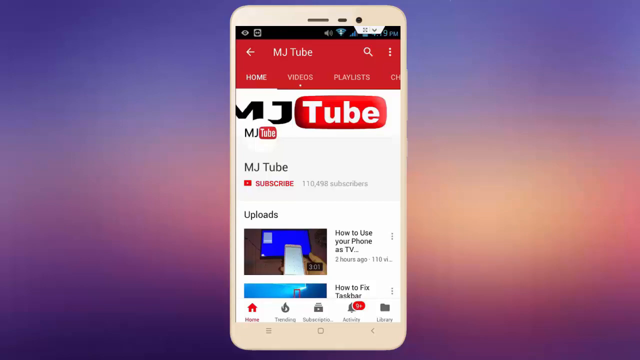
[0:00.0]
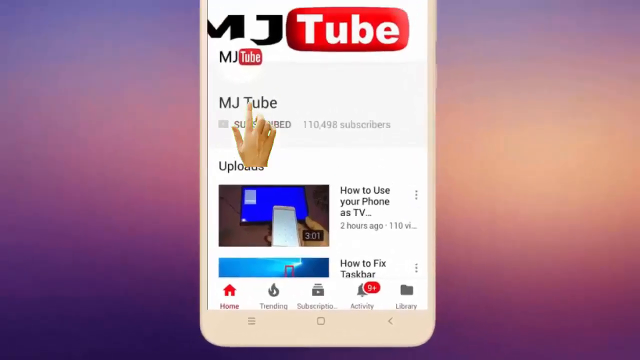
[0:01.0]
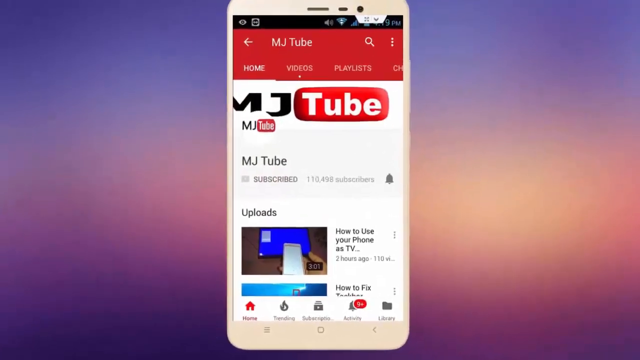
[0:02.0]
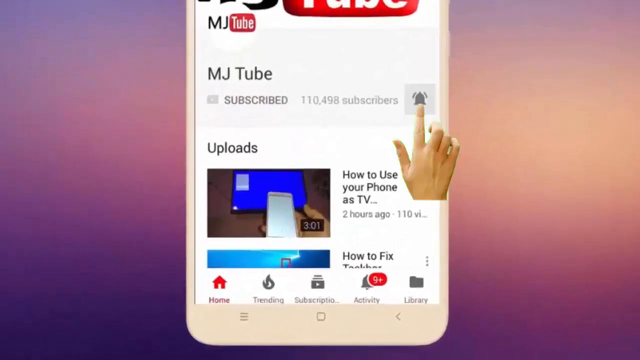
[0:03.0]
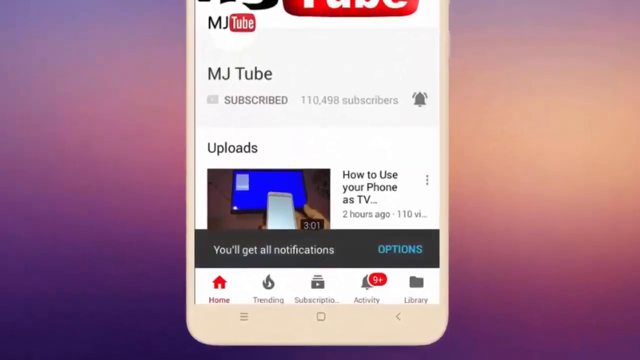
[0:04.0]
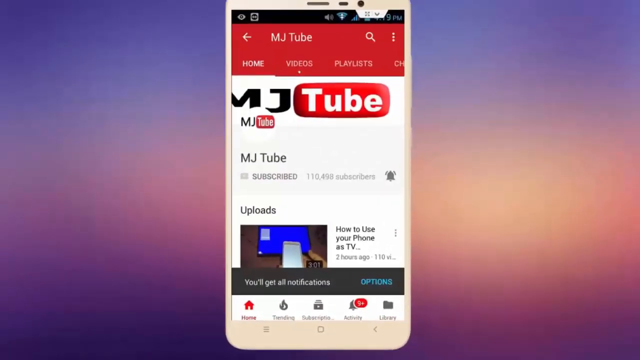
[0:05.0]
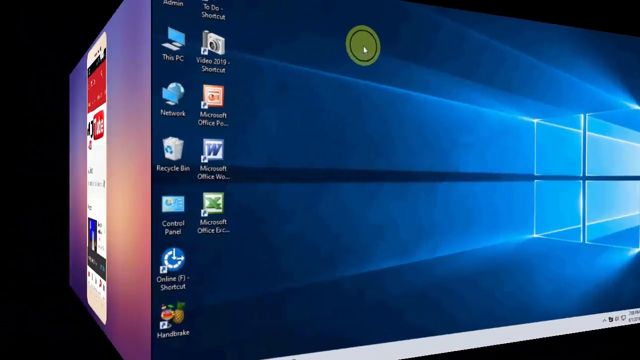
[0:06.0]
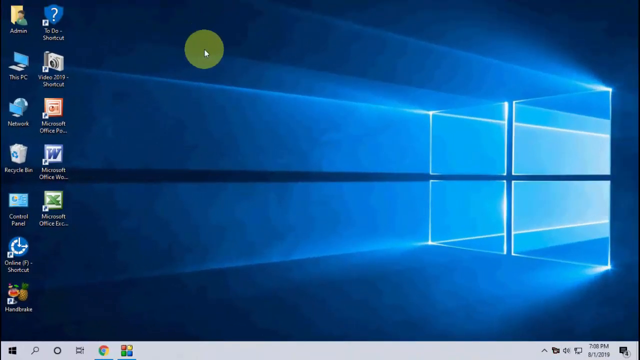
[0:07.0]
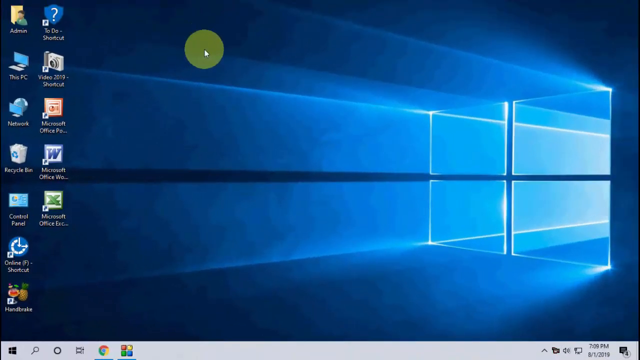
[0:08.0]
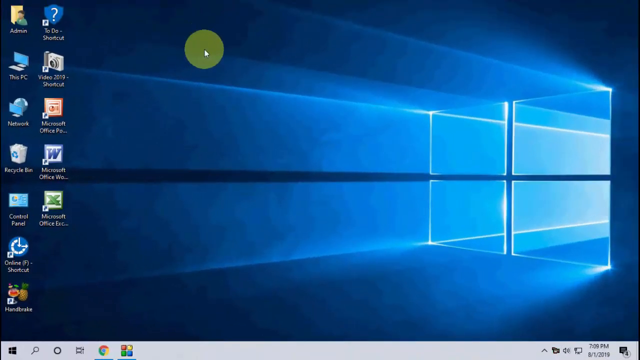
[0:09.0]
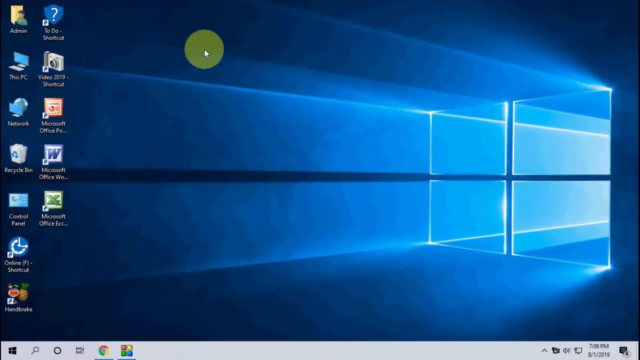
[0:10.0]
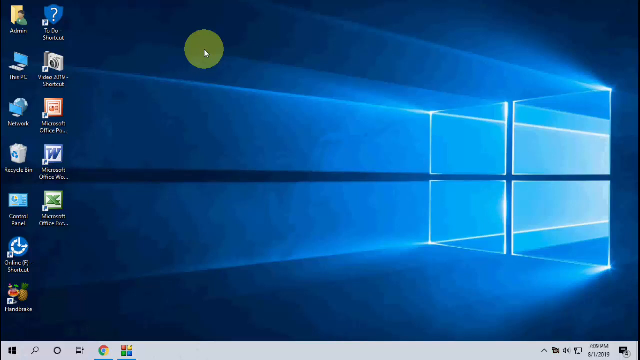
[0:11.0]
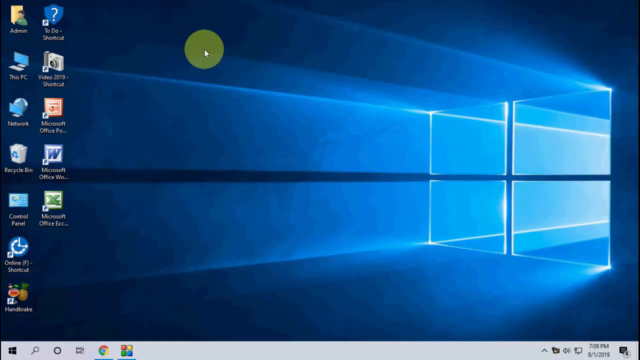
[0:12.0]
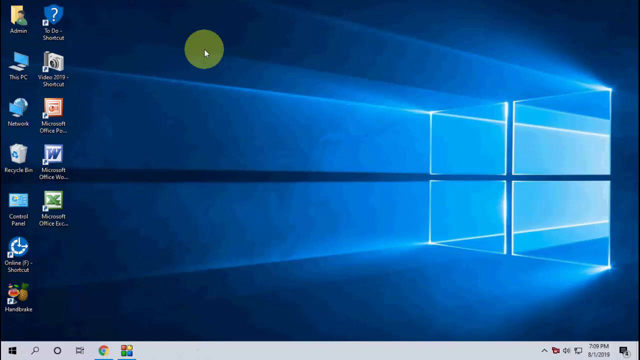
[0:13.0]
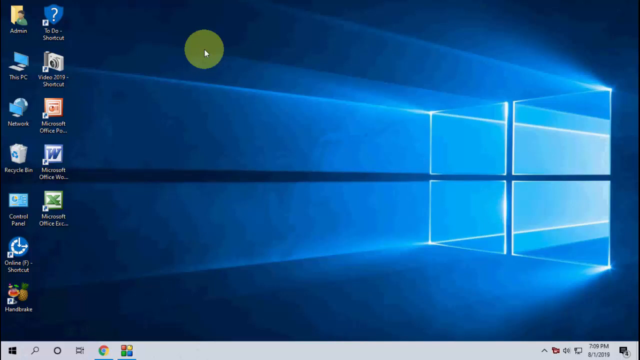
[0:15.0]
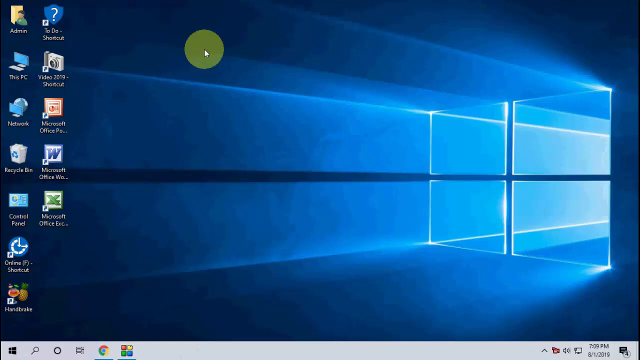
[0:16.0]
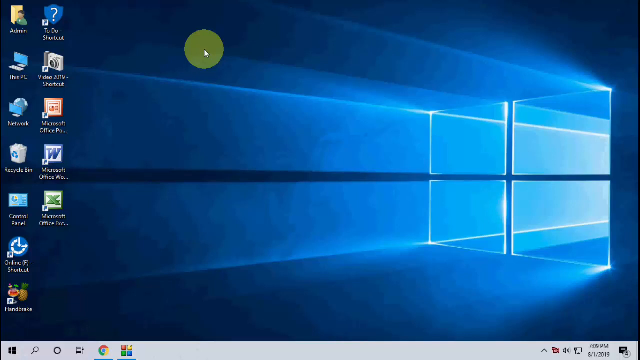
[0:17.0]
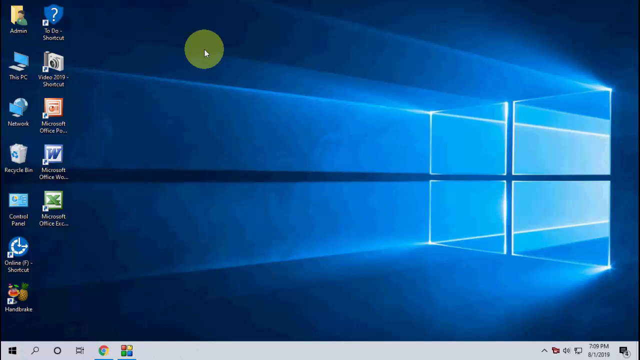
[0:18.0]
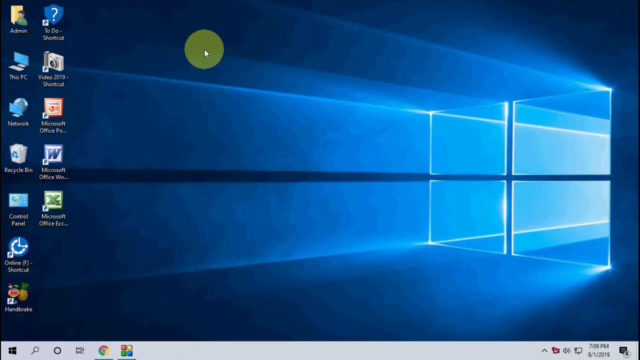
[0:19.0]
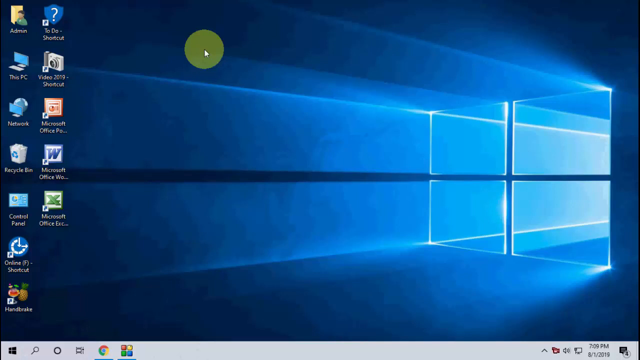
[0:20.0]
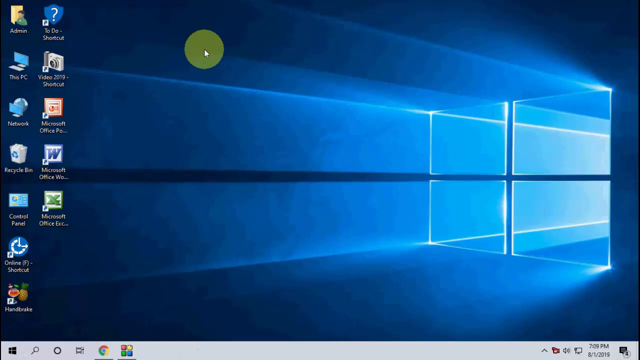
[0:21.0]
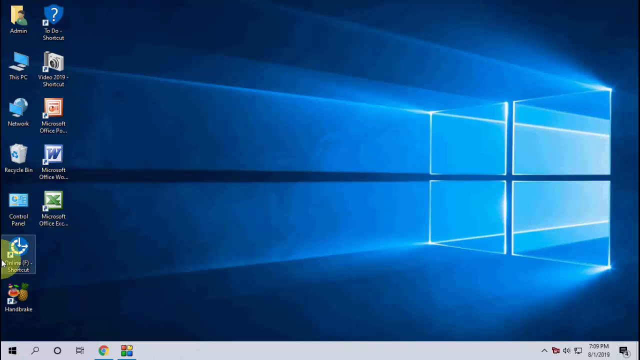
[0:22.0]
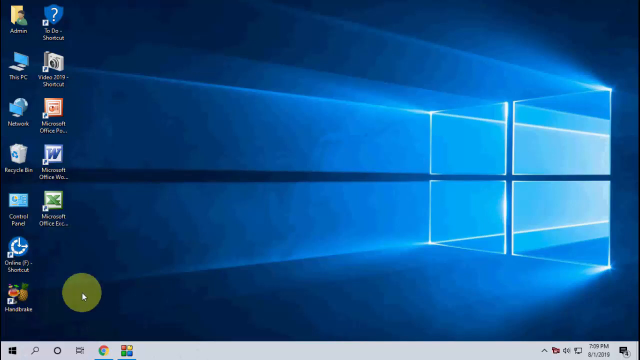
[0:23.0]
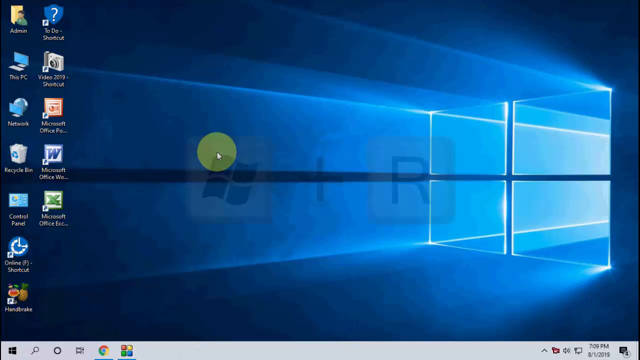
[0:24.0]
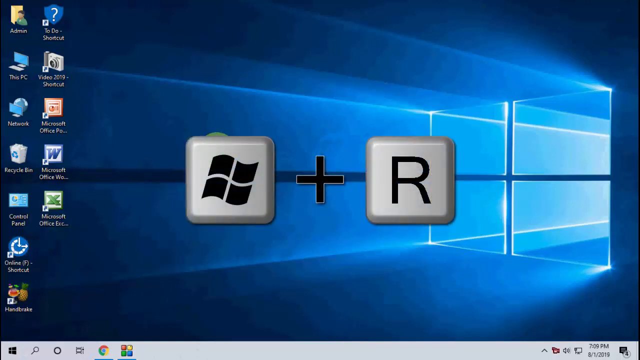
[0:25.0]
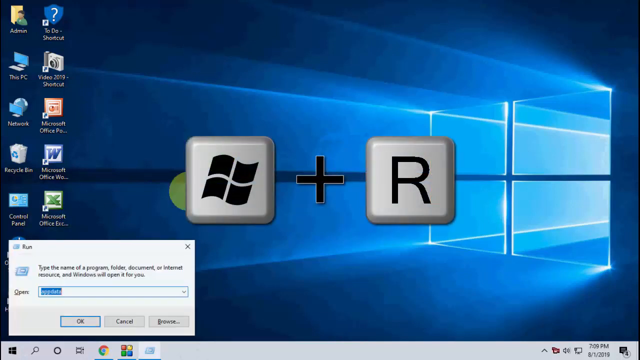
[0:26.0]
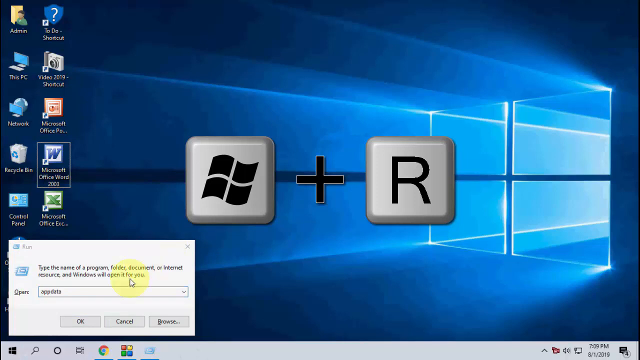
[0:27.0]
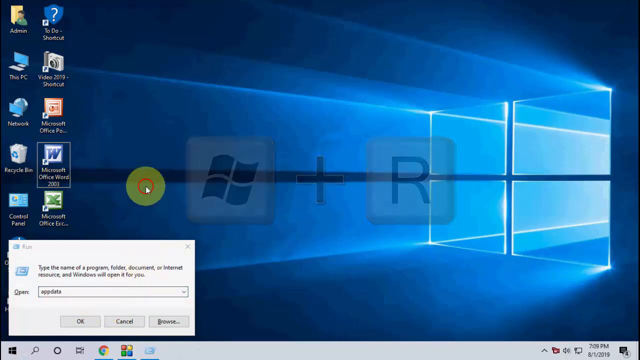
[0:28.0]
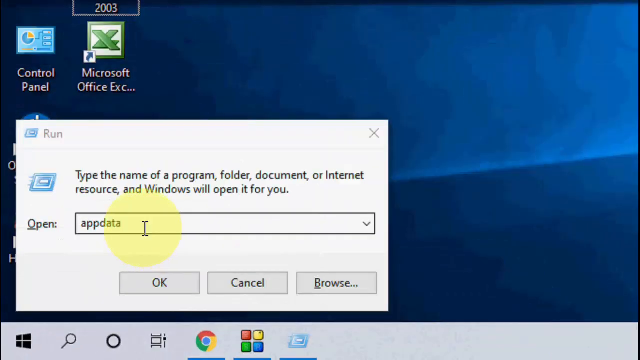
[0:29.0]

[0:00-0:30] The video opens on an app on a phone called MJtube, which is similar to YouTube, and the view keeps zooming in and out of it. An animated finger appears and clicks on the subscribe button, and then "you'll get all notifications" pops up. The video then goes to a desktop screen with a standard kind of blue background and a mouse cursor that has a green circle around it. The cursor stays in that position until it goes to the very bottom left of the screen, then goes back up close to the center. The Windows key, a plus sign and the R key then appear on the screen side by side. After that, the run box pops up at the bottom left, already populated with some blue text, and Microsoft Office Word is highlighted. The mouse, which is now a yellow highlighter, moves around and goes over the text in the run box.